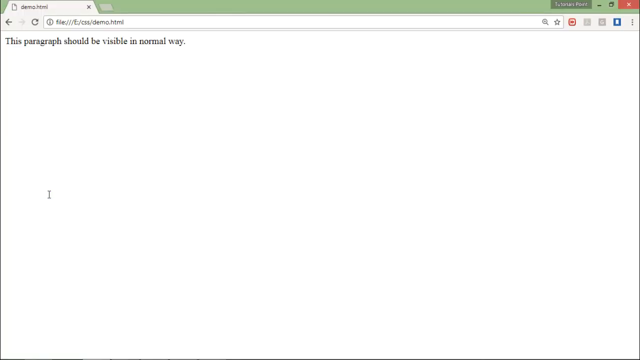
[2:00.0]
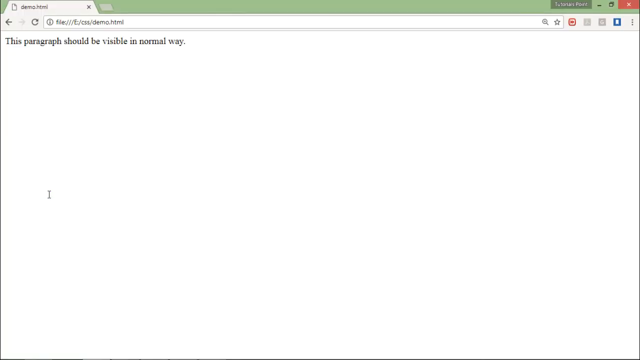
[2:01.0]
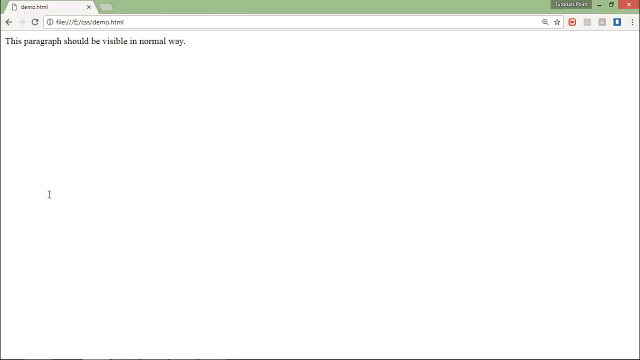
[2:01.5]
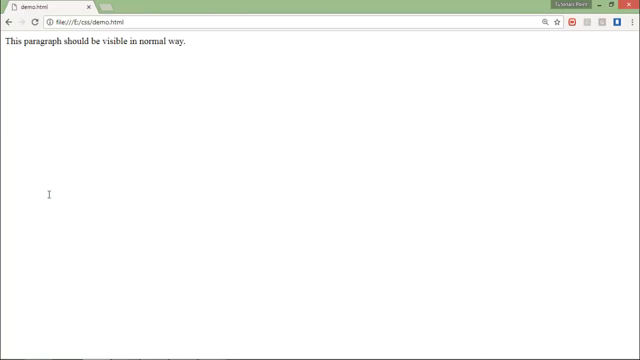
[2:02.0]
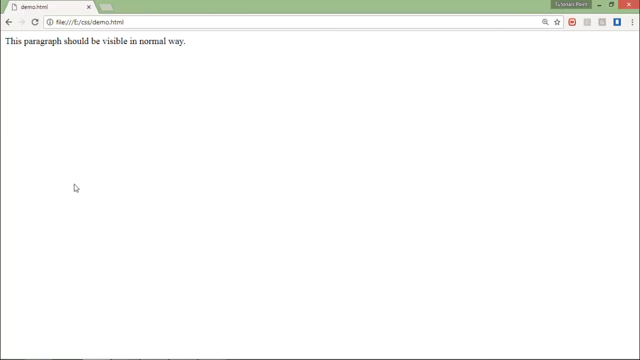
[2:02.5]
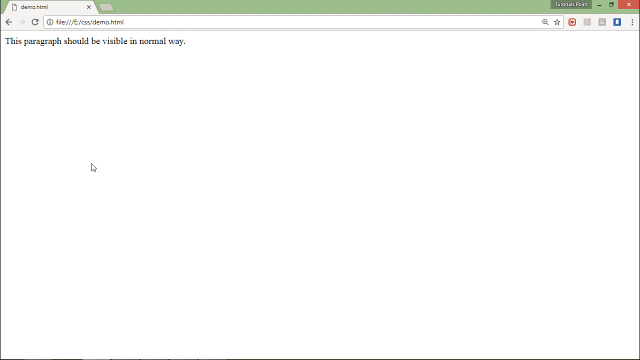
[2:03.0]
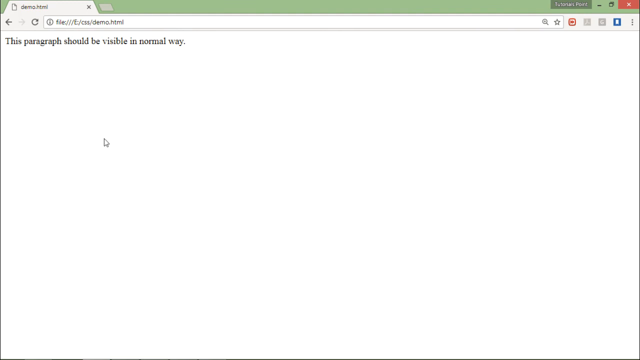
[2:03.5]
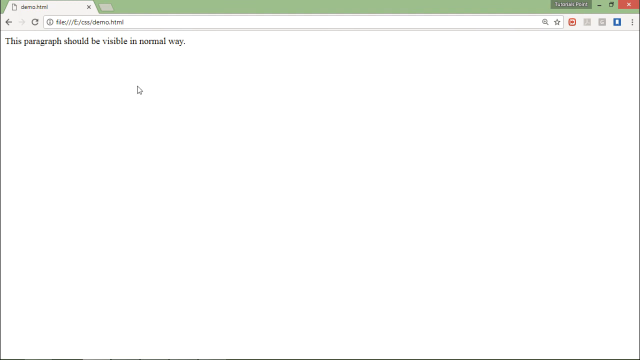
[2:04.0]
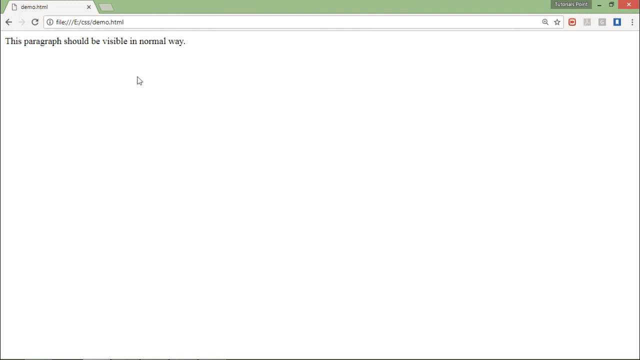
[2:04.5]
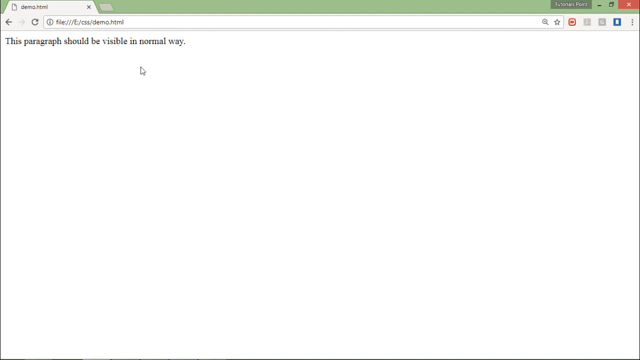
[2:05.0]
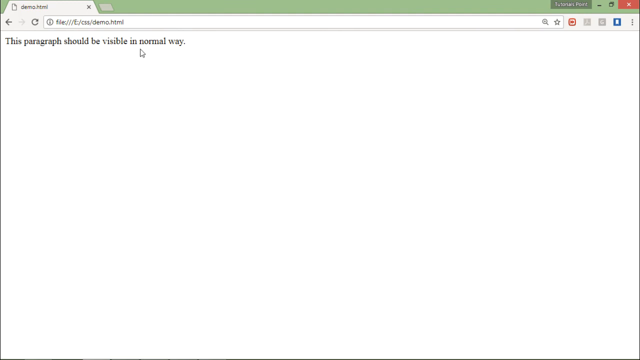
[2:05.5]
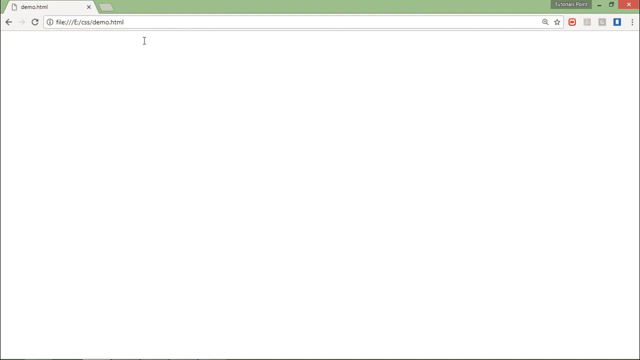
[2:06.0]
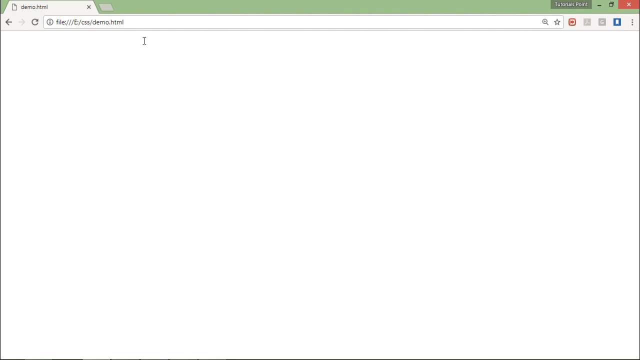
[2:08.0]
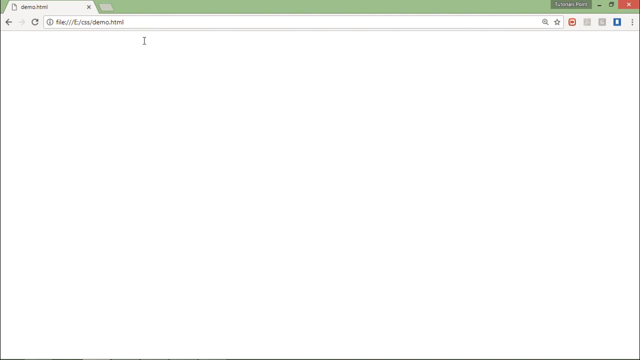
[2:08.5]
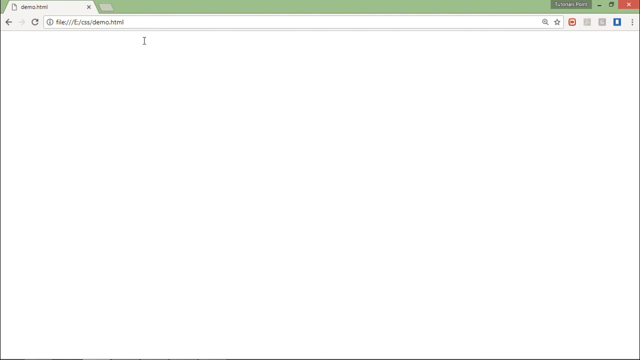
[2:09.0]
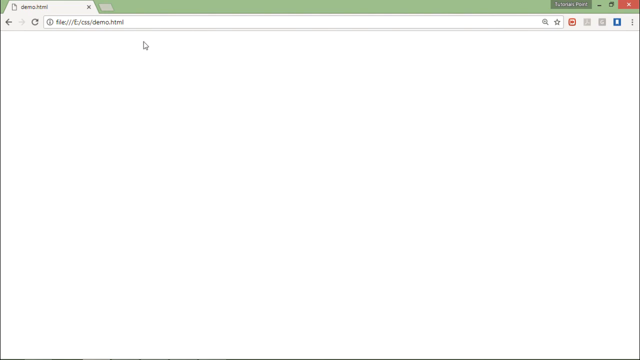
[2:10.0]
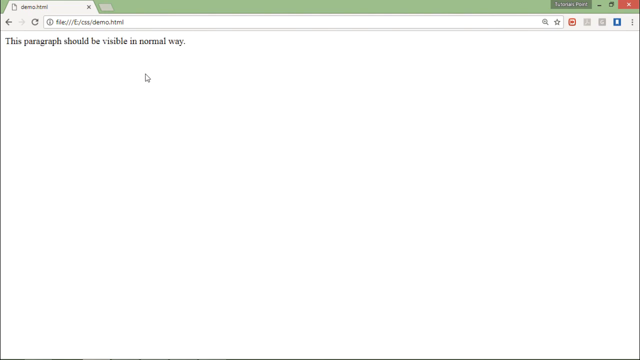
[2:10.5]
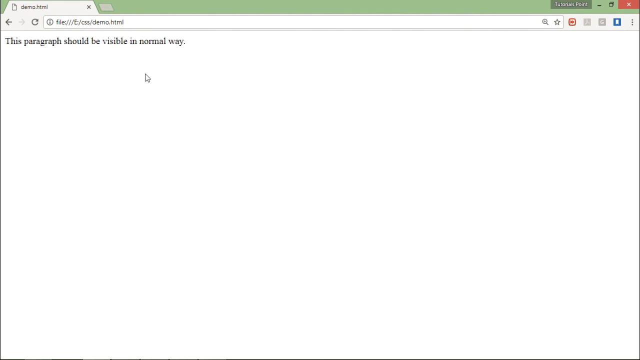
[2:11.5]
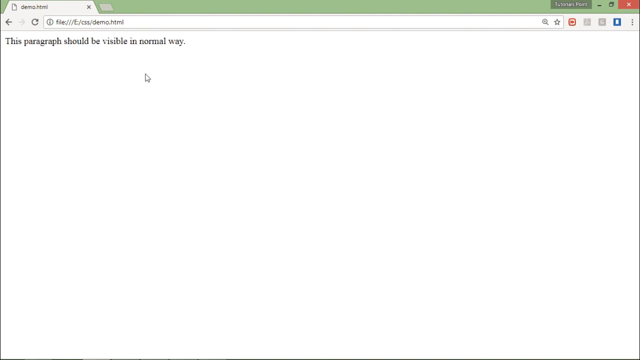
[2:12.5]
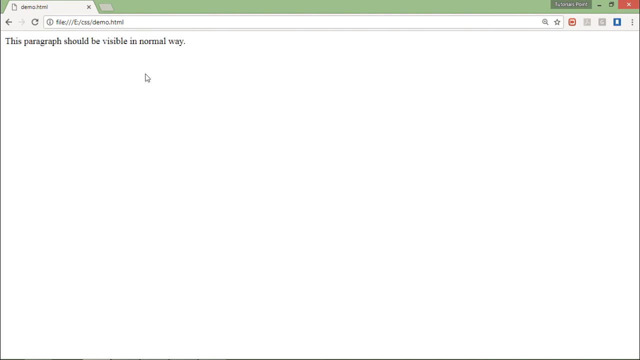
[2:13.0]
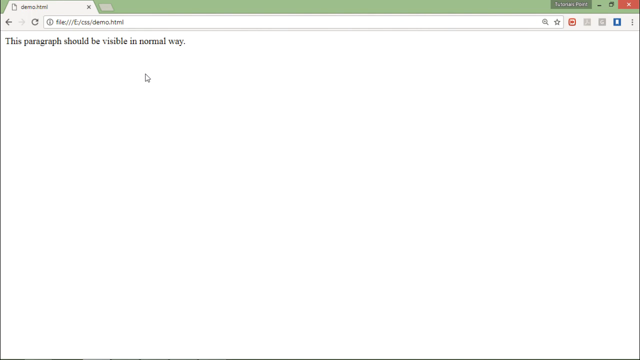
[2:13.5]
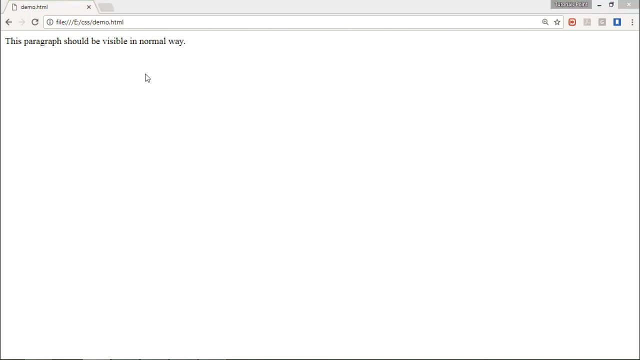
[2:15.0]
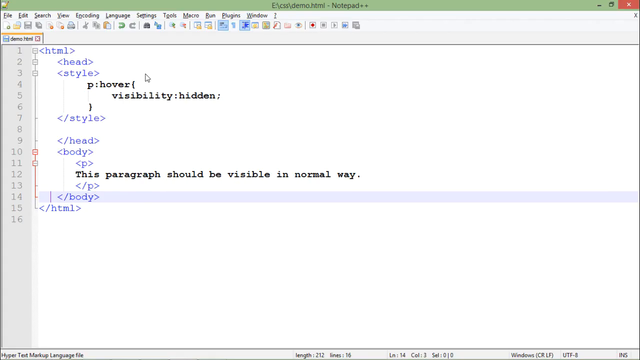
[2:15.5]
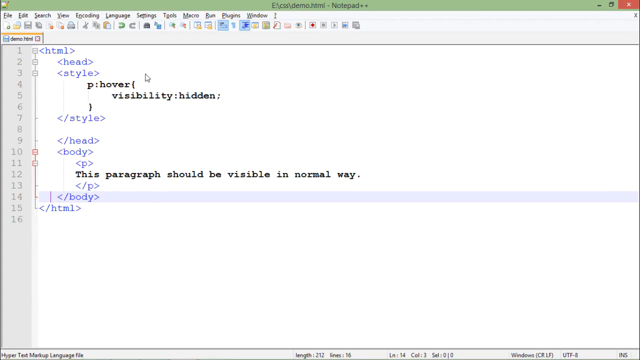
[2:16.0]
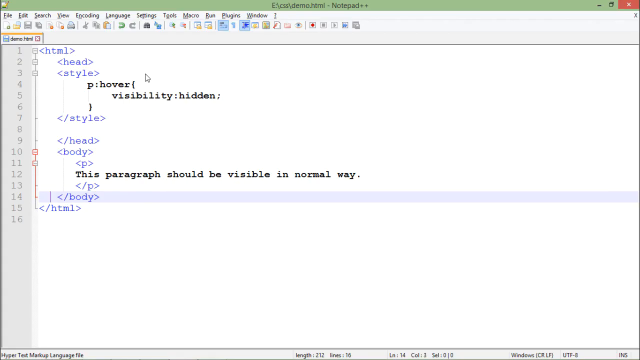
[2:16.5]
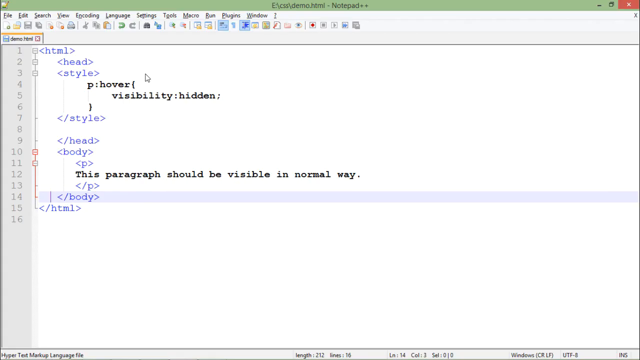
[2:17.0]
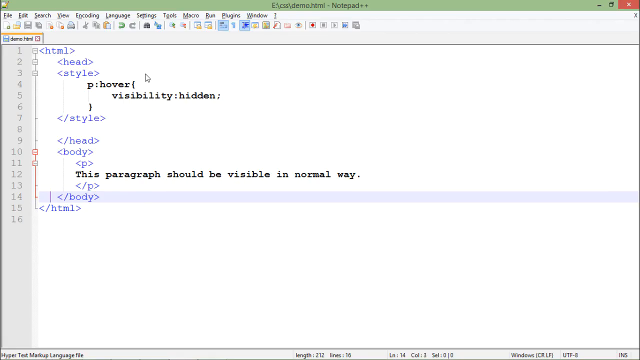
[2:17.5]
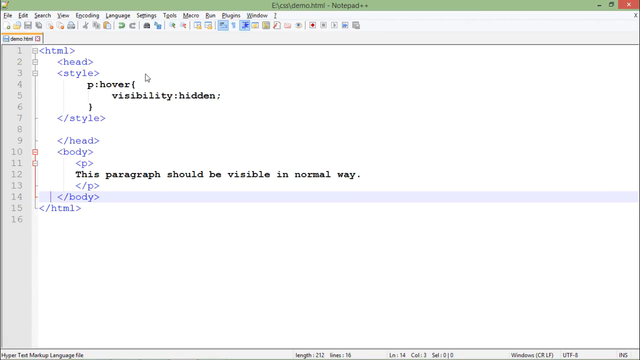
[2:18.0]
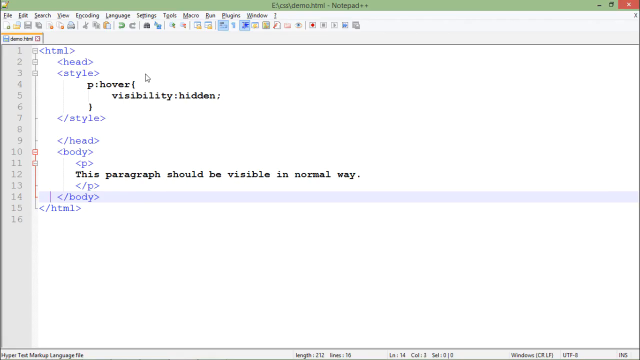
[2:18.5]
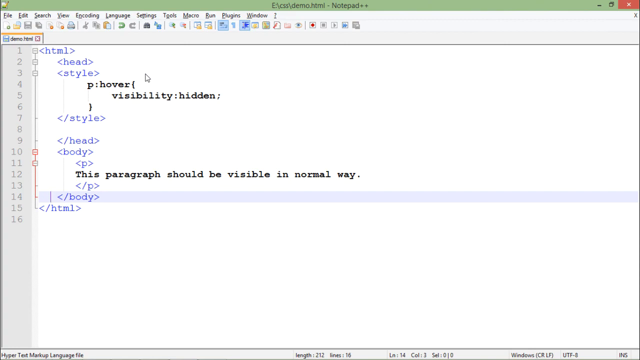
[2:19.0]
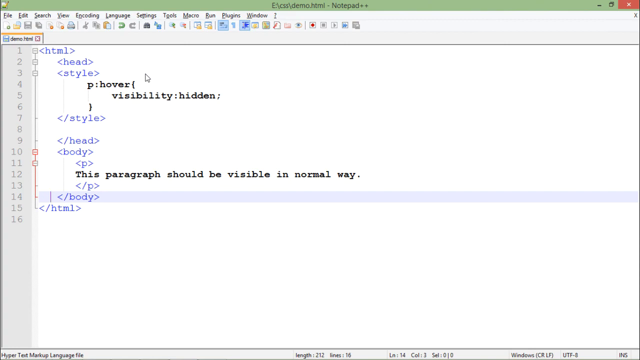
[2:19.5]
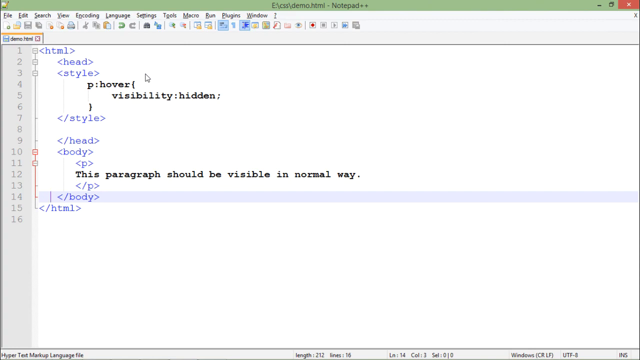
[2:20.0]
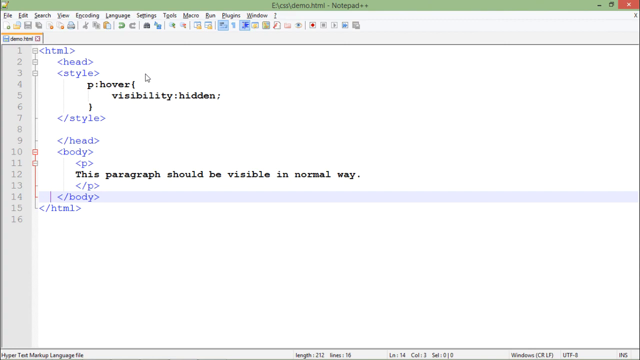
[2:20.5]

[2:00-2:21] The HTML page is loaded in the web browser, a very basic page with a white background and black text. The cursor hovers over the text, and the added CSS hover style makes the text invisible. The cursor then moves off the text and it becomes visible again. No people or animals are visible, and the setting changes only between the code editor and the web browser showing the HTML page and its functionality.